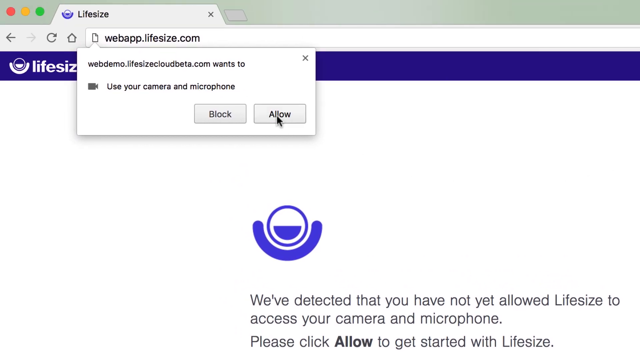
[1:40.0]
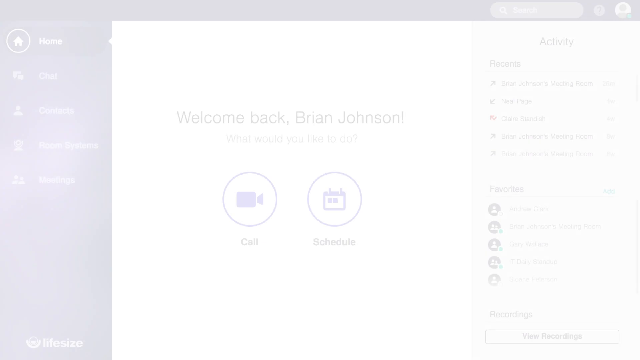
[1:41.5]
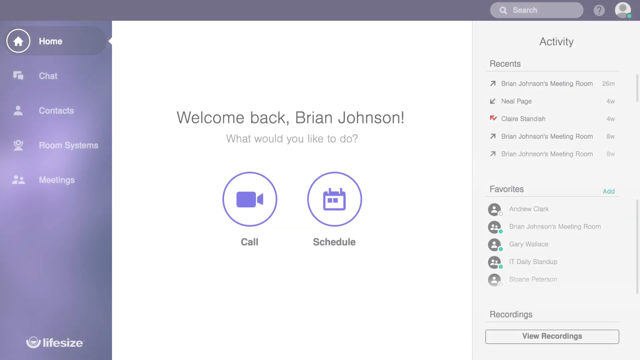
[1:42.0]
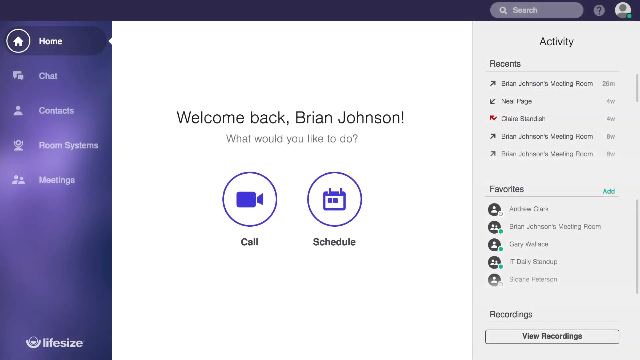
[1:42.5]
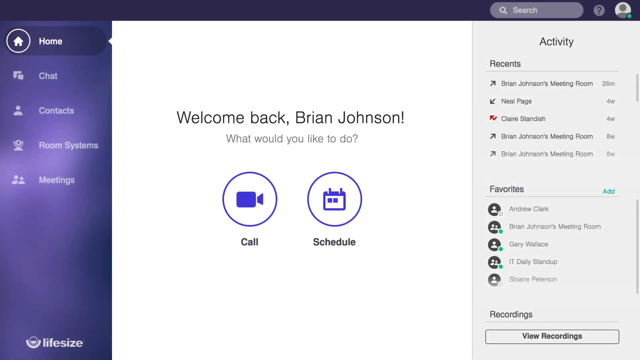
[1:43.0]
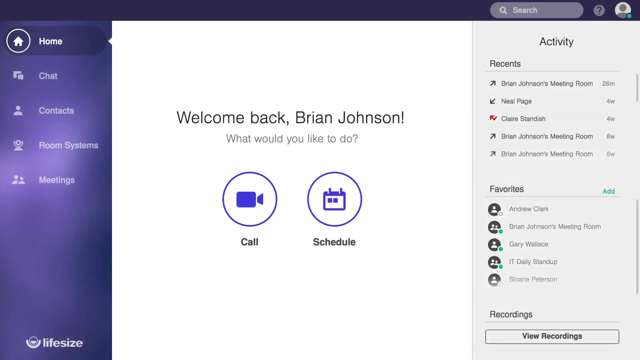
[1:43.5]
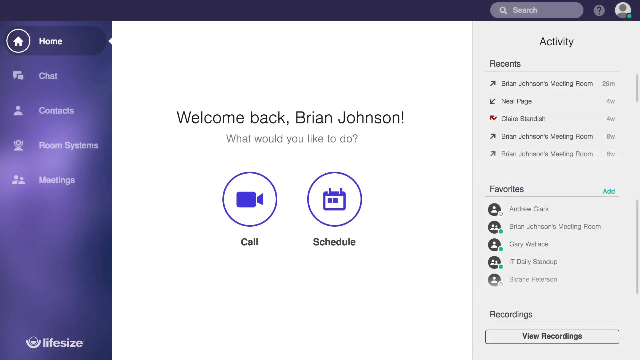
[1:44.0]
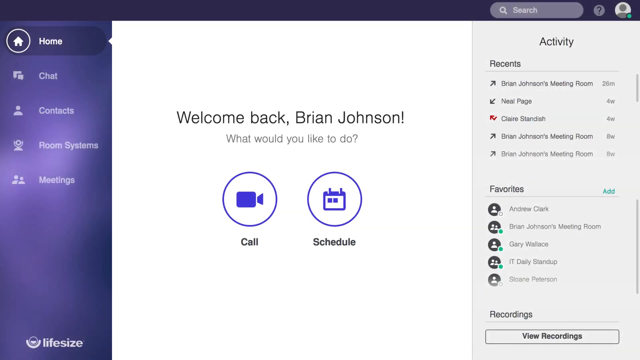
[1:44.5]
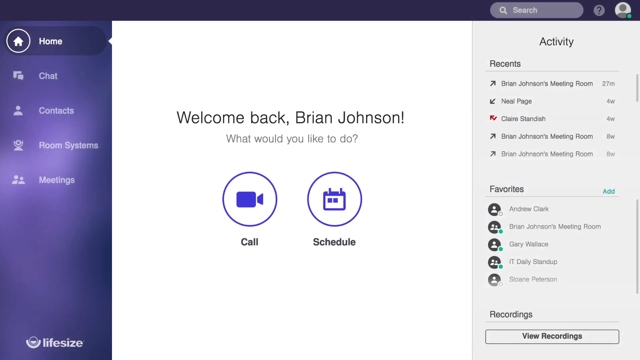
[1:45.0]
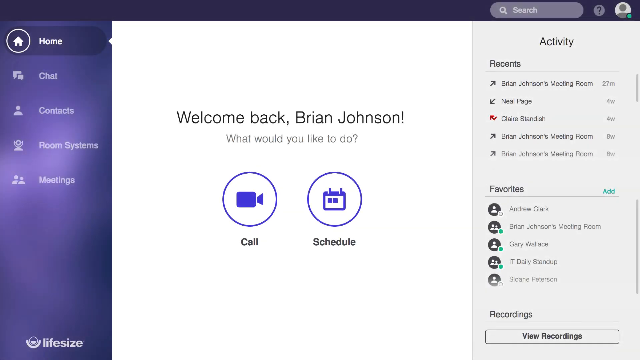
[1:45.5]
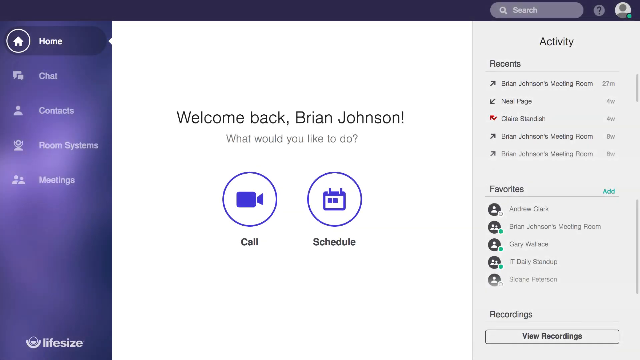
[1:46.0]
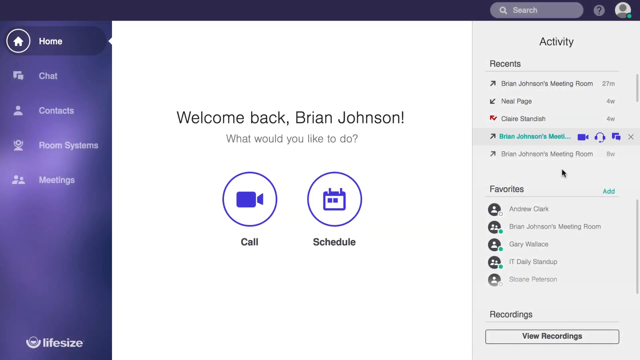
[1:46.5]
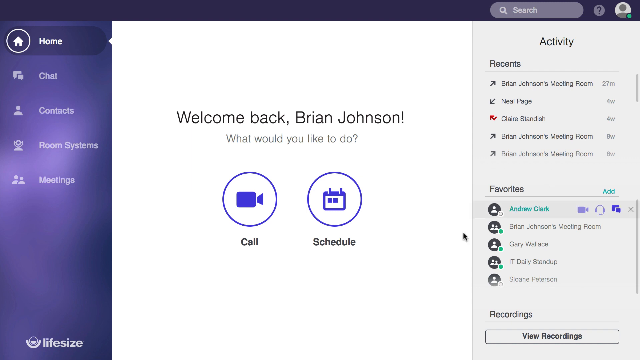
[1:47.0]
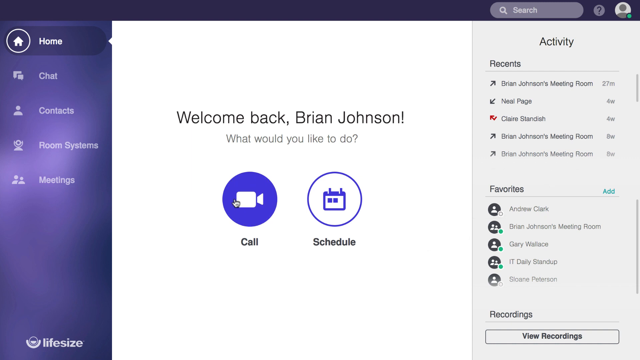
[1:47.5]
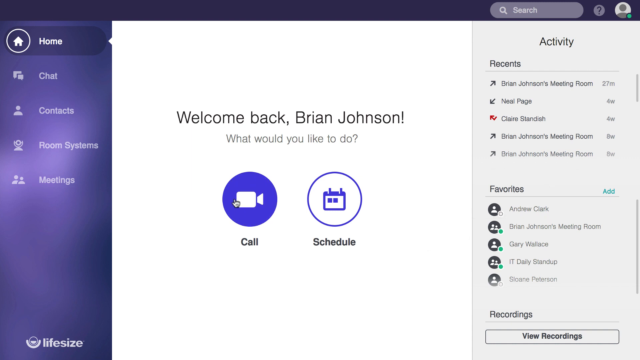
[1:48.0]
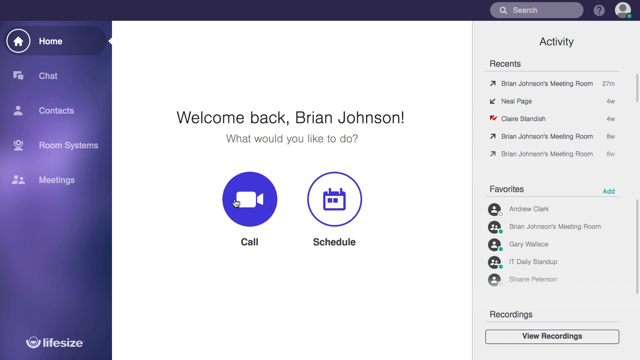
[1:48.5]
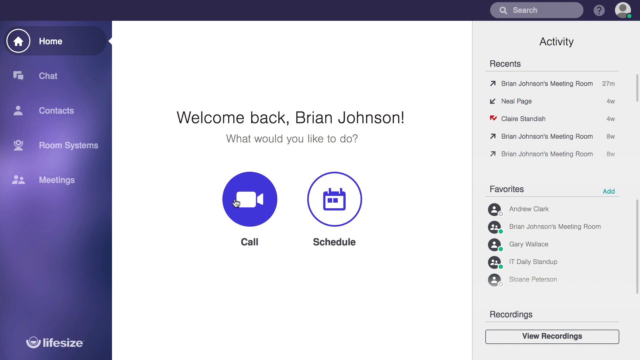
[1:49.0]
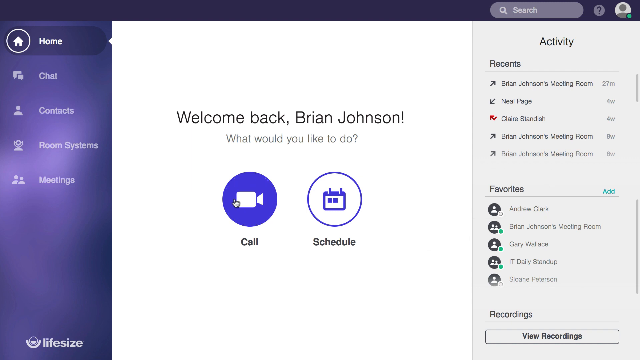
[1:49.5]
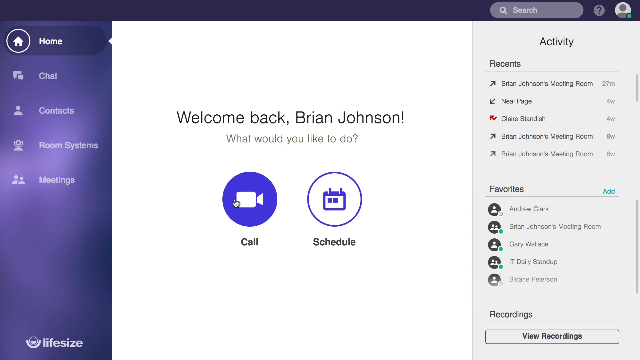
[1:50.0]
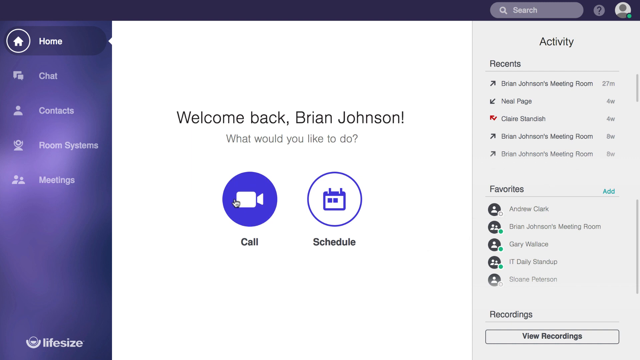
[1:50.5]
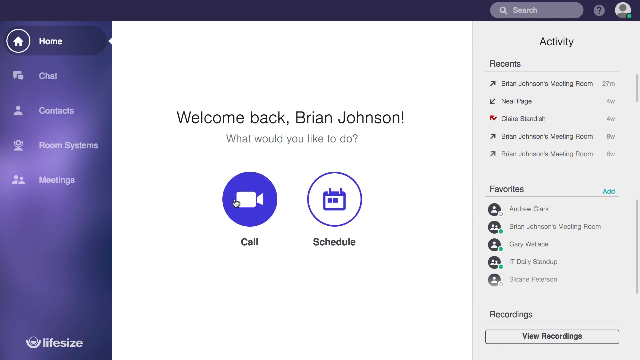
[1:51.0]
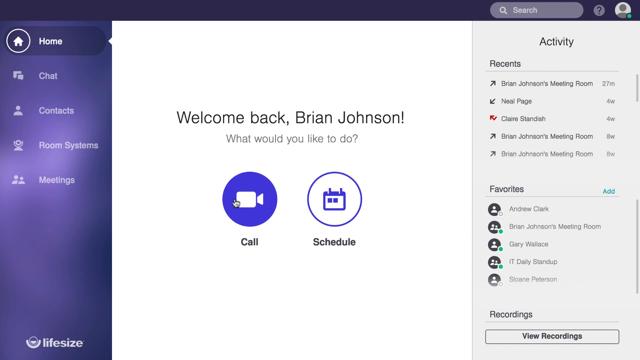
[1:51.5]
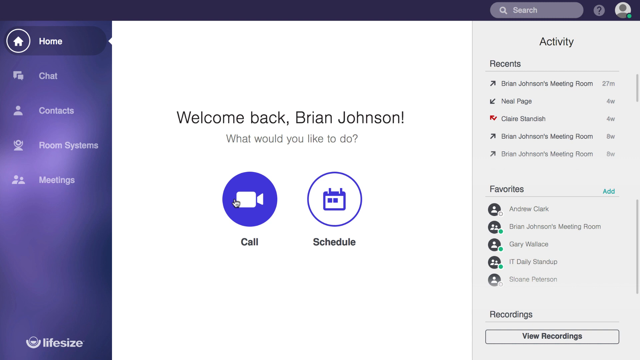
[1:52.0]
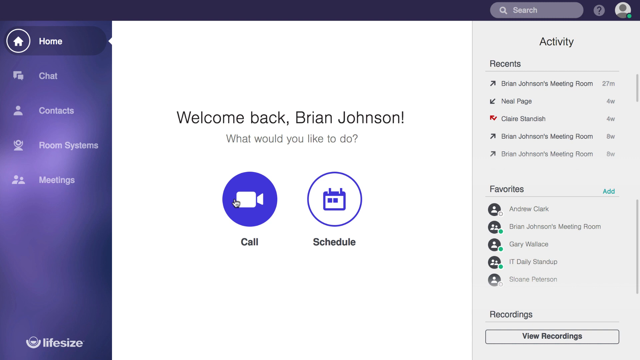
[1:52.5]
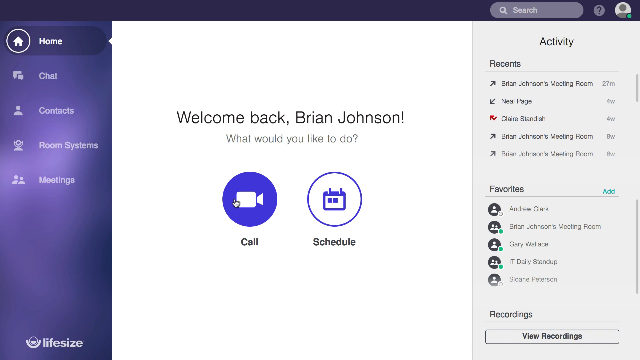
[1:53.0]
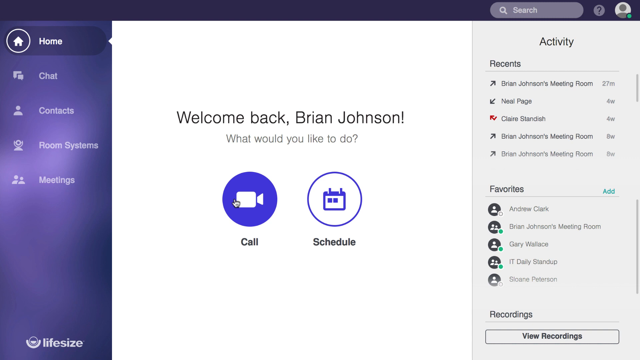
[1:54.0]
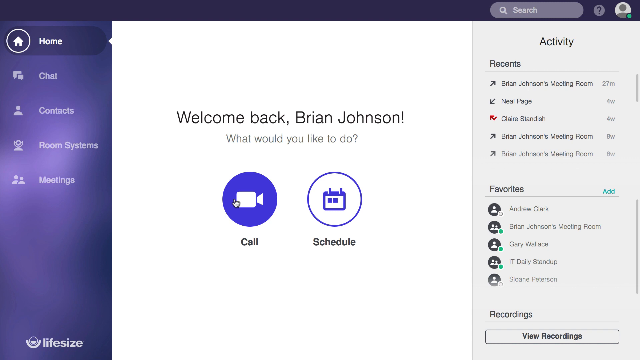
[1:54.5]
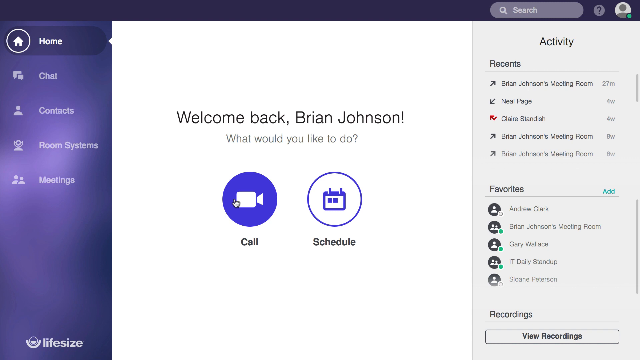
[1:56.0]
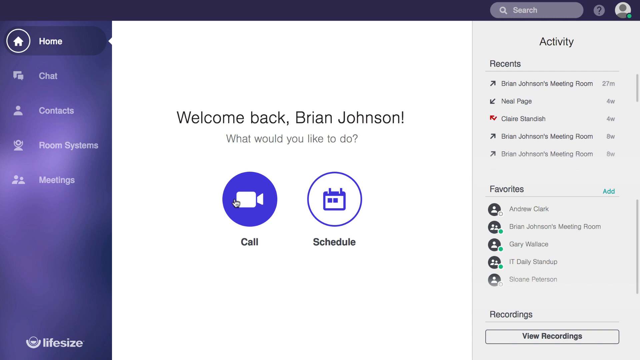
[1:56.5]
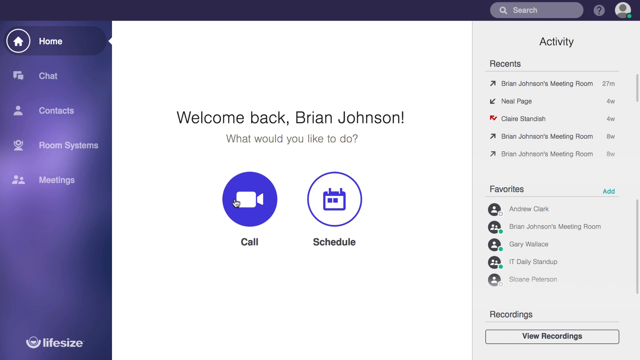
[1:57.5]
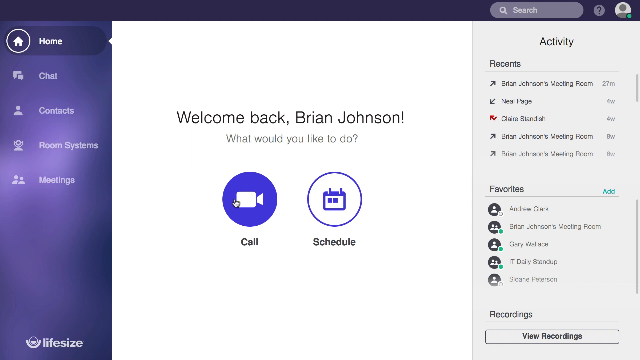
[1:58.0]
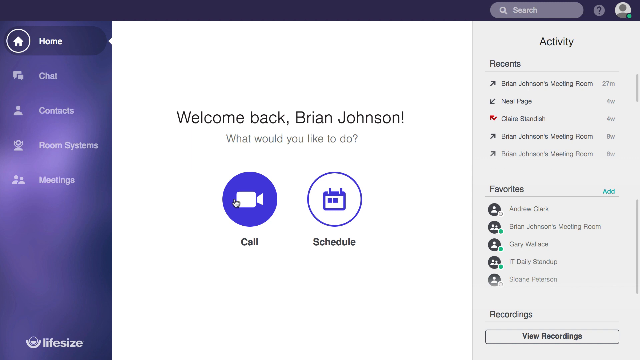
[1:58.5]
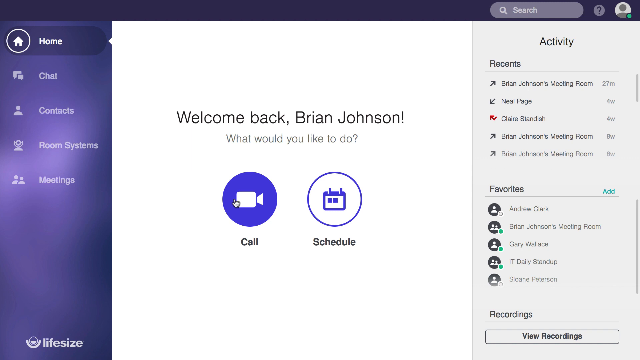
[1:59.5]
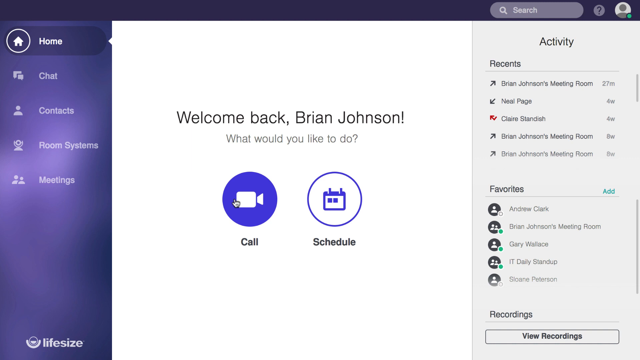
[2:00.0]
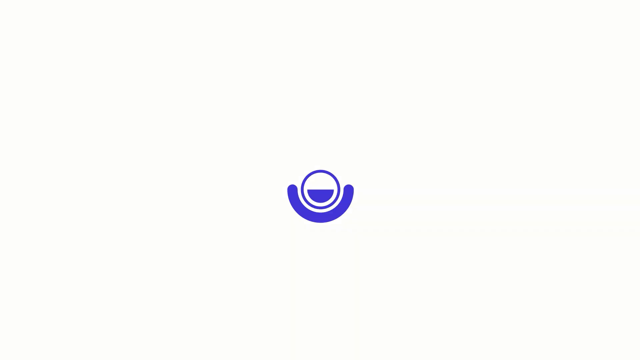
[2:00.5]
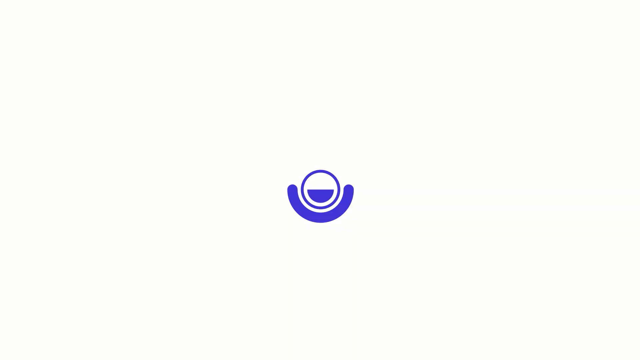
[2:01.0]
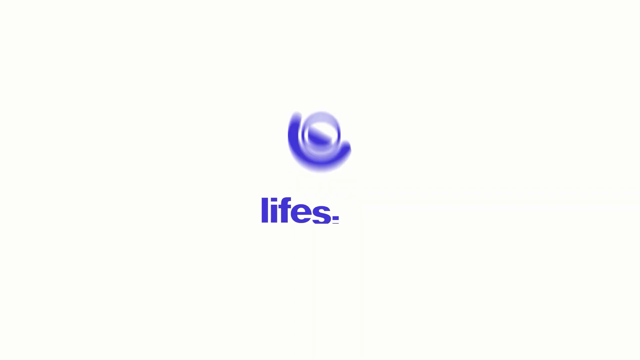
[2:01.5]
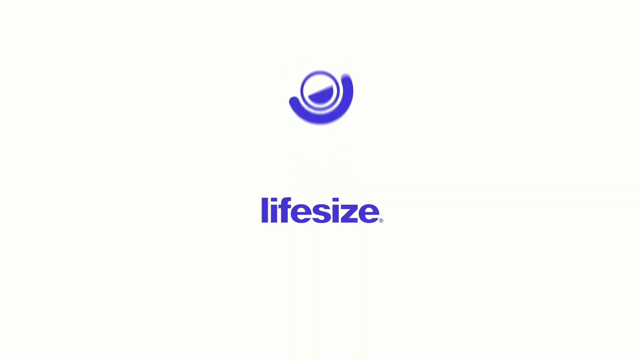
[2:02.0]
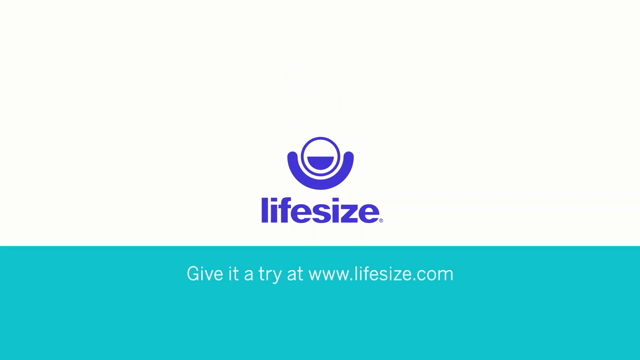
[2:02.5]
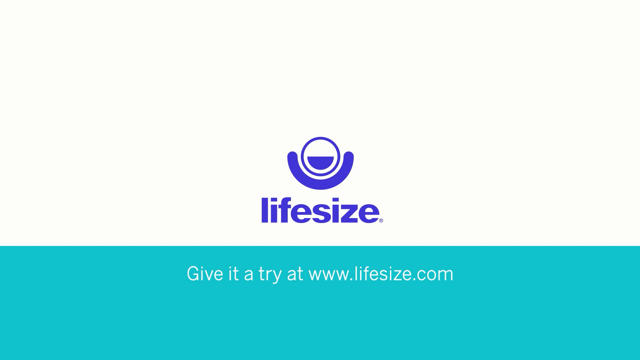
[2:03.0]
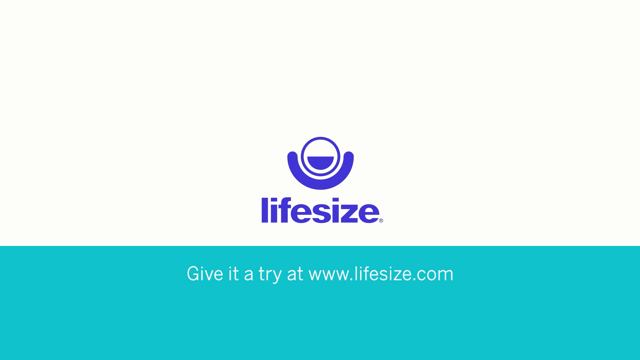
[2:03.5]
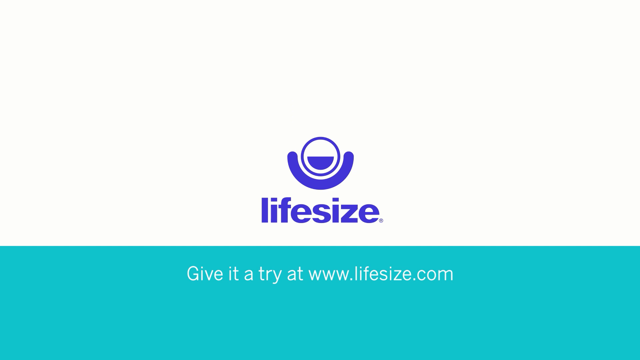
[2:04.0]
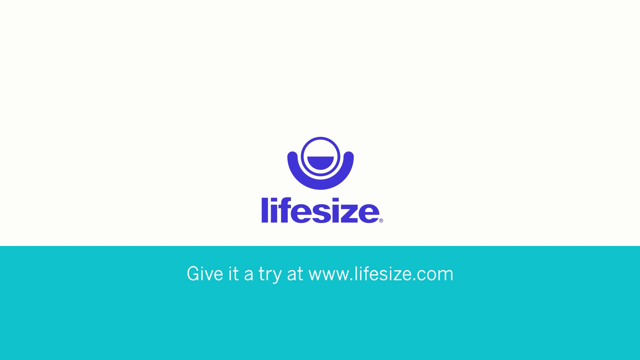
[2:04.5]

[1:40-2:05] An open web page called Lifesize, used for video conferencing, shows a cursor clicking the Allow button to use the camera and microphone. The screen then switches back to a welcome screen that reads "Welcome Back, Brian Johnson! What would you like to do?" Below it is a Call button with an icon of a camera and the word Call beneath it, and next to that a Schedule button with an icon of a calendar and the word Schedule below. The cursor highlights the Call button. The video then switches to an end card with the Lifesize logo in the center of the screen; it looks like a smiling emoji with no eyes, with a blue semicircle underneath it and the word "lifesize" below that. A light blue text bar across the bottom of the screen says "give it a try at www.lifesize.com".